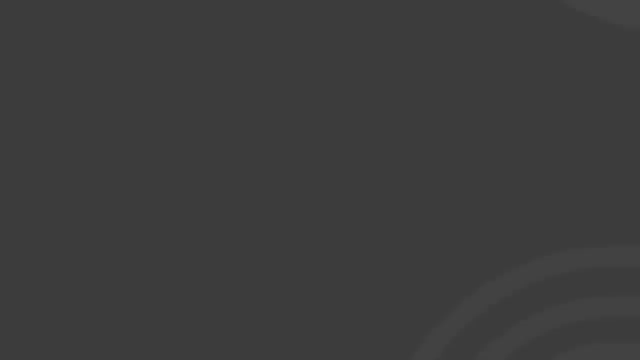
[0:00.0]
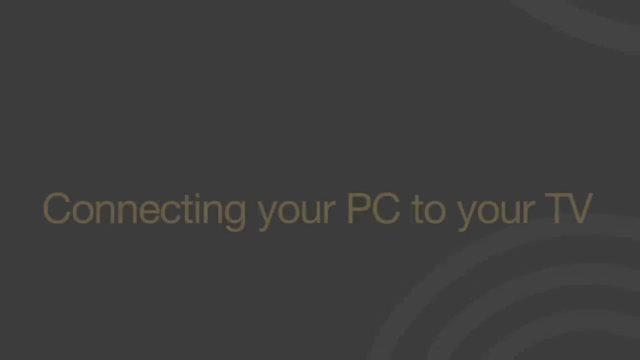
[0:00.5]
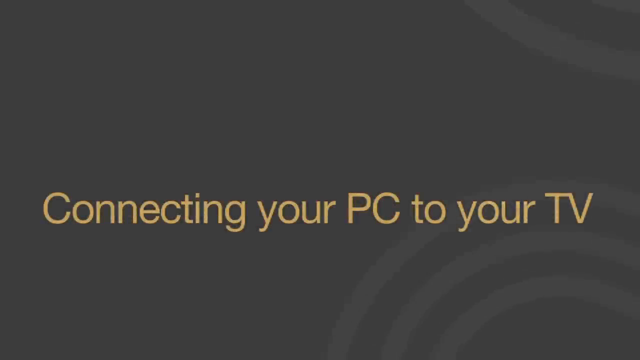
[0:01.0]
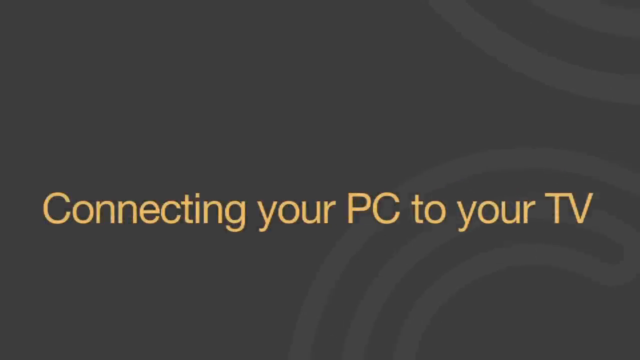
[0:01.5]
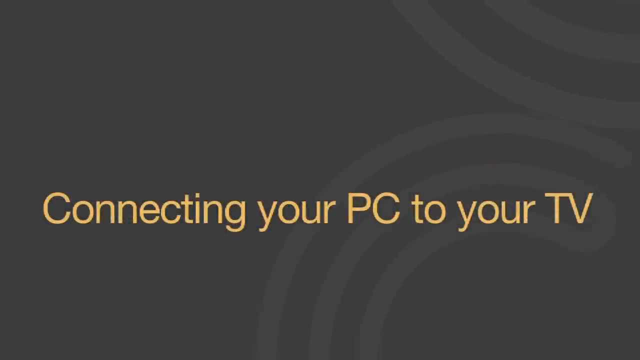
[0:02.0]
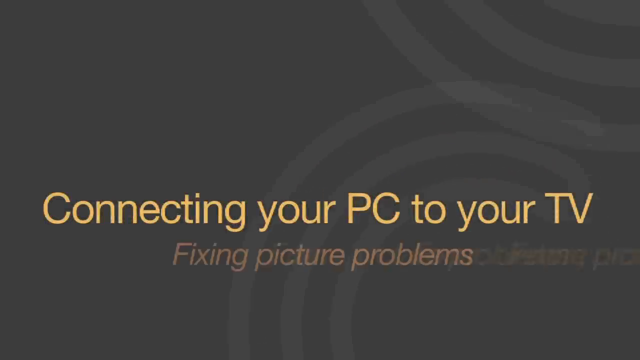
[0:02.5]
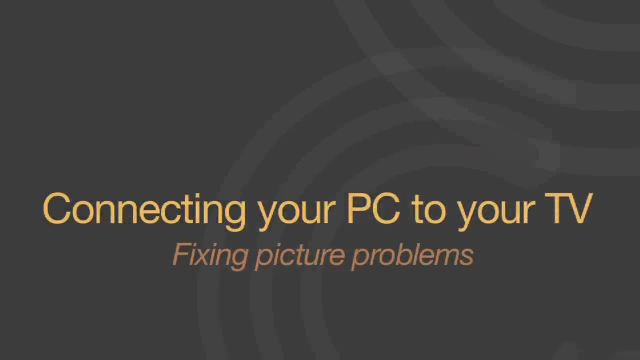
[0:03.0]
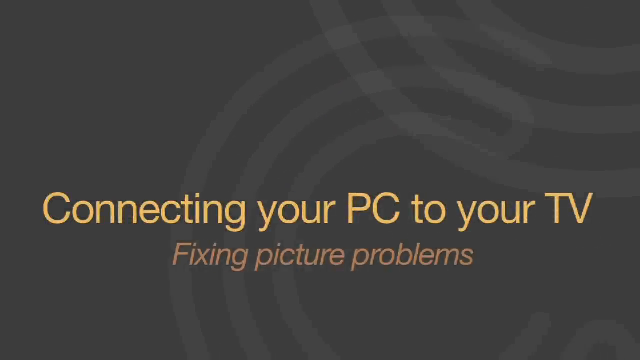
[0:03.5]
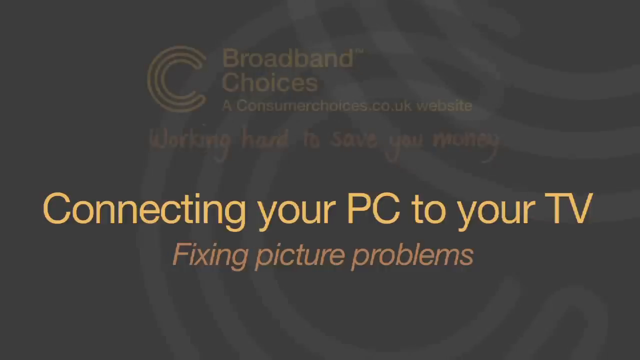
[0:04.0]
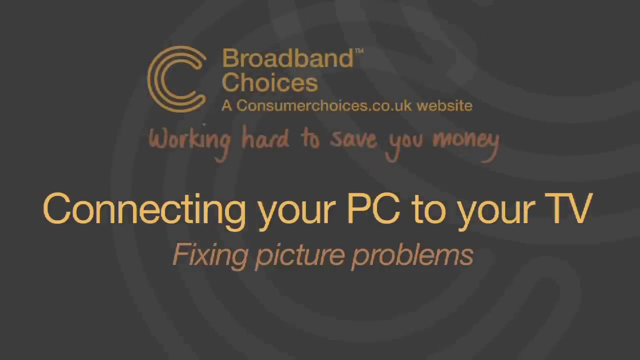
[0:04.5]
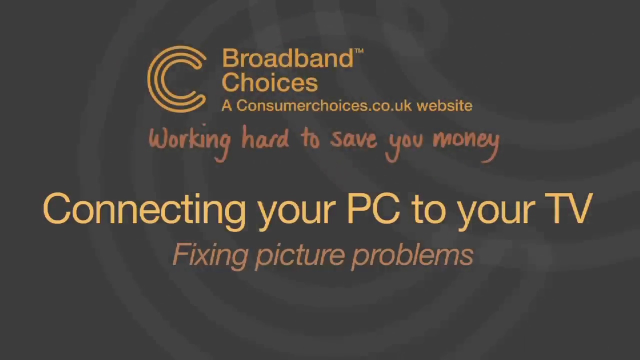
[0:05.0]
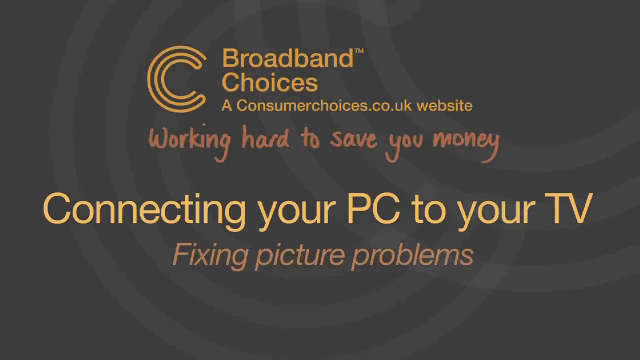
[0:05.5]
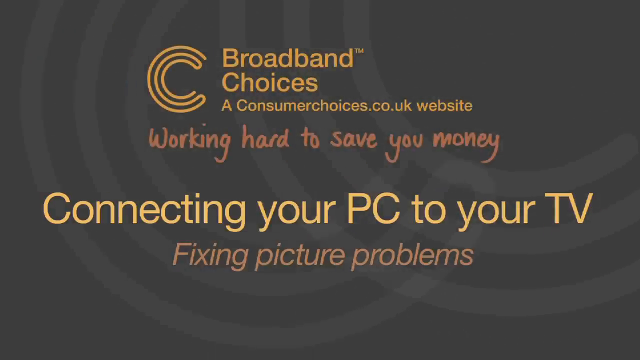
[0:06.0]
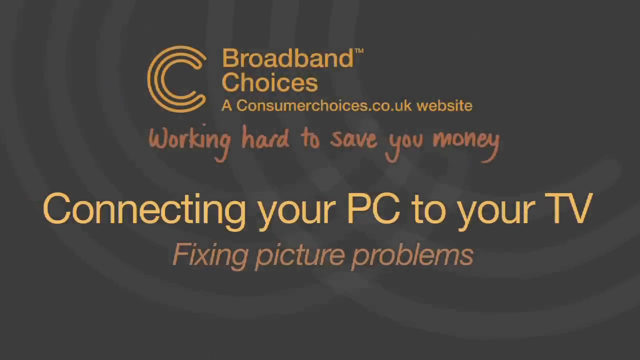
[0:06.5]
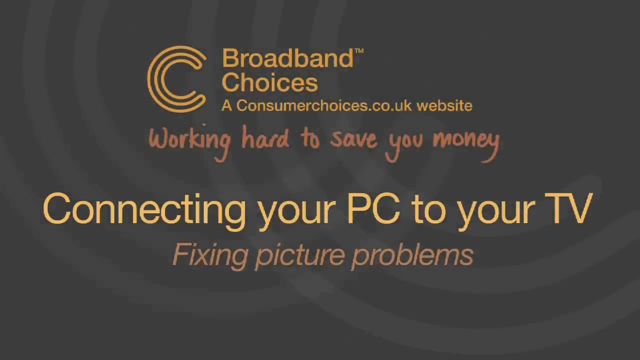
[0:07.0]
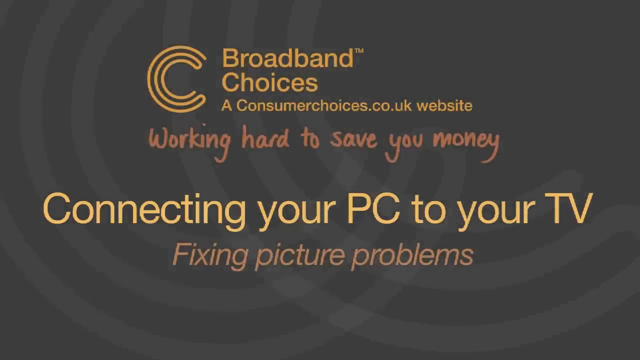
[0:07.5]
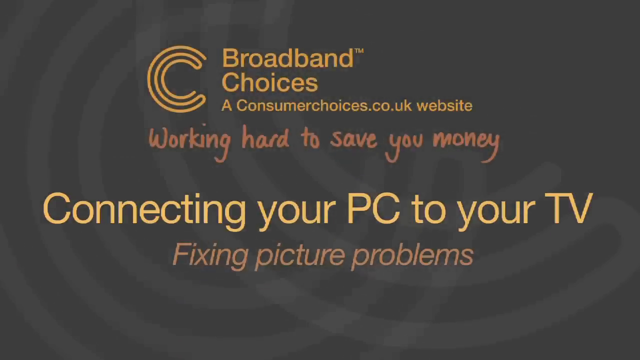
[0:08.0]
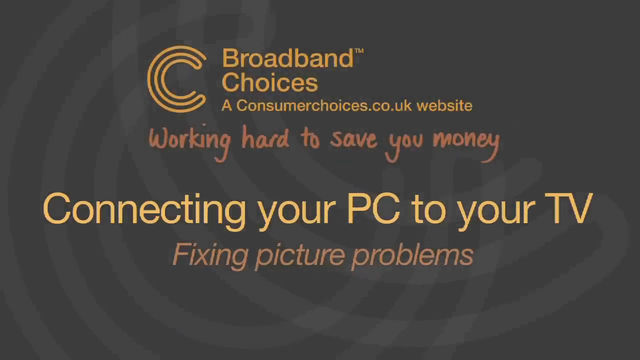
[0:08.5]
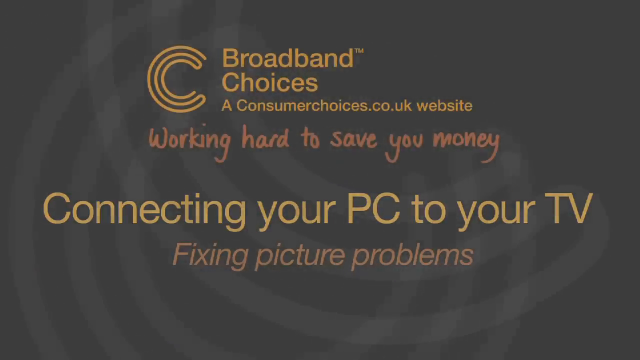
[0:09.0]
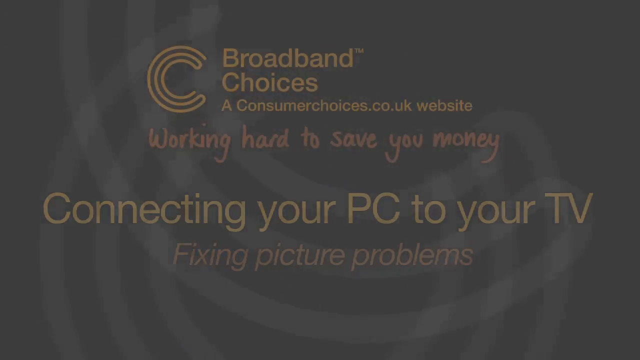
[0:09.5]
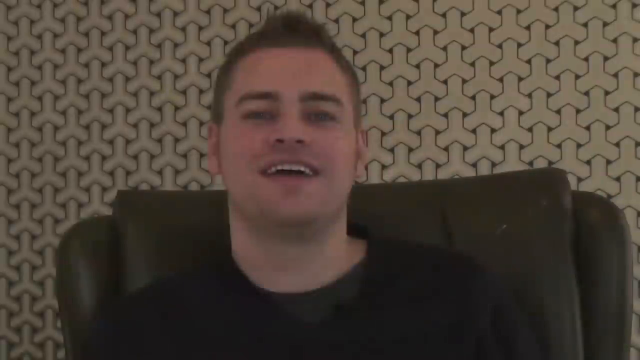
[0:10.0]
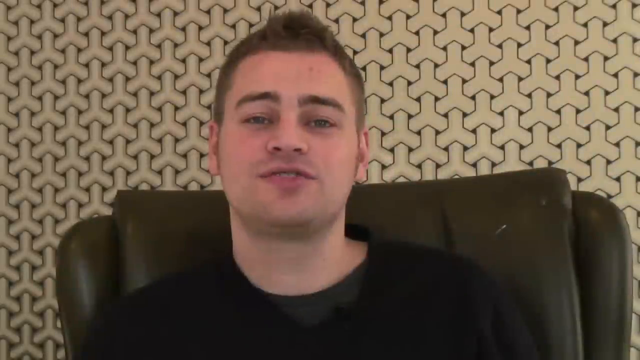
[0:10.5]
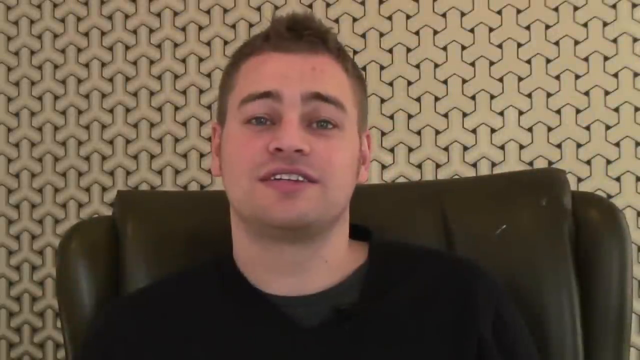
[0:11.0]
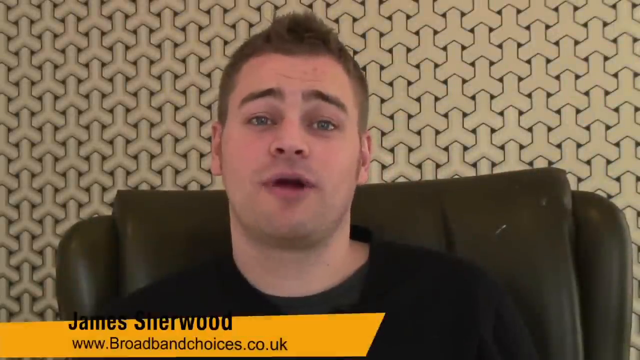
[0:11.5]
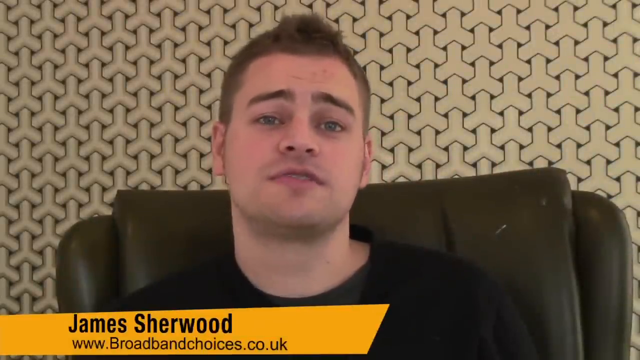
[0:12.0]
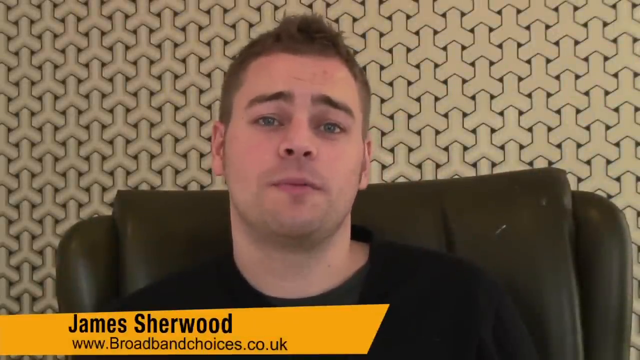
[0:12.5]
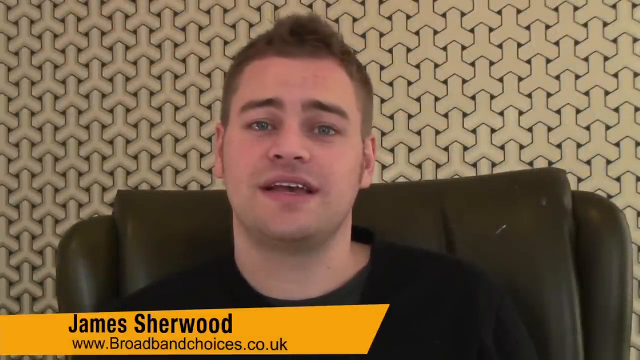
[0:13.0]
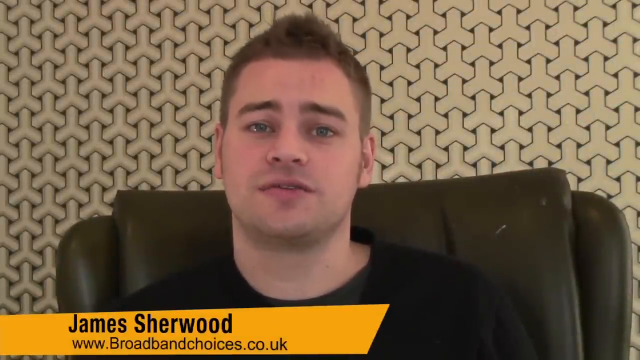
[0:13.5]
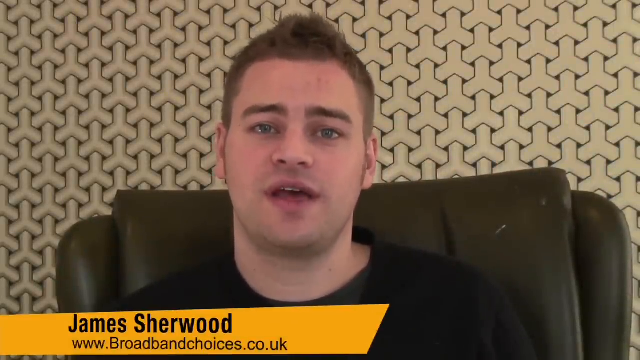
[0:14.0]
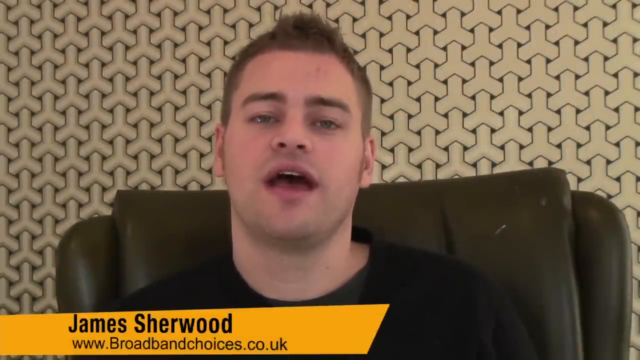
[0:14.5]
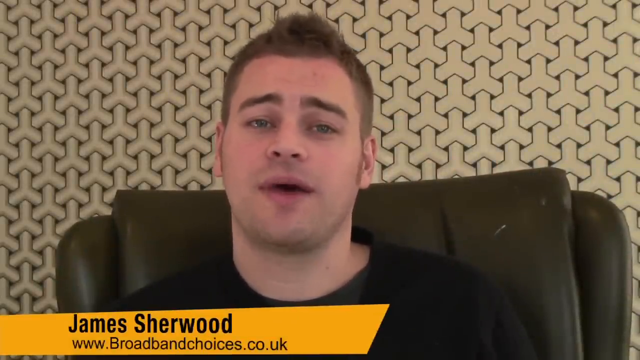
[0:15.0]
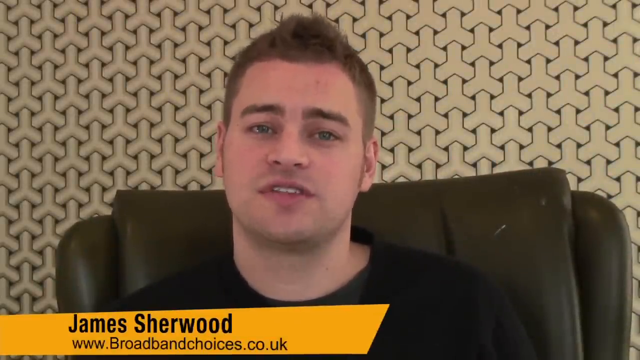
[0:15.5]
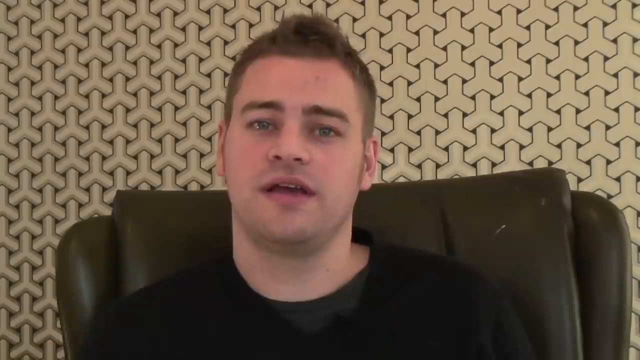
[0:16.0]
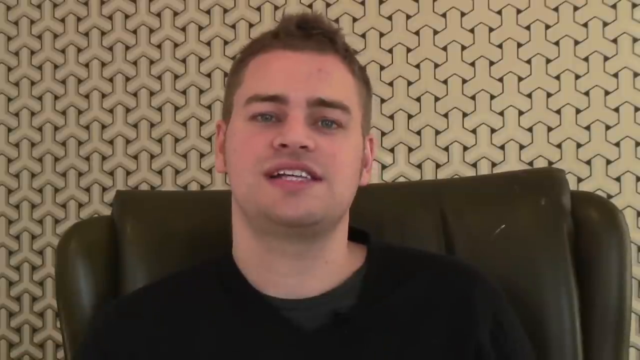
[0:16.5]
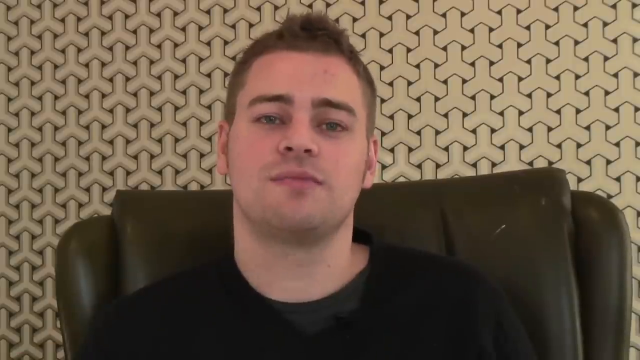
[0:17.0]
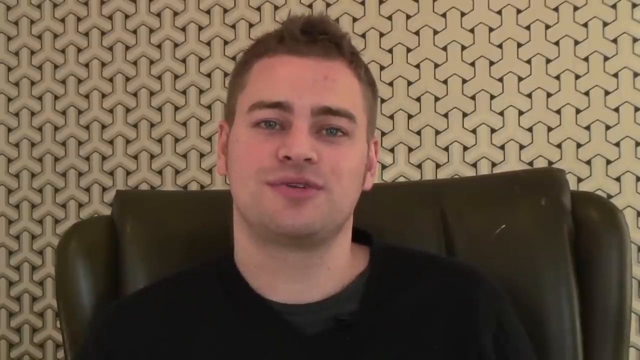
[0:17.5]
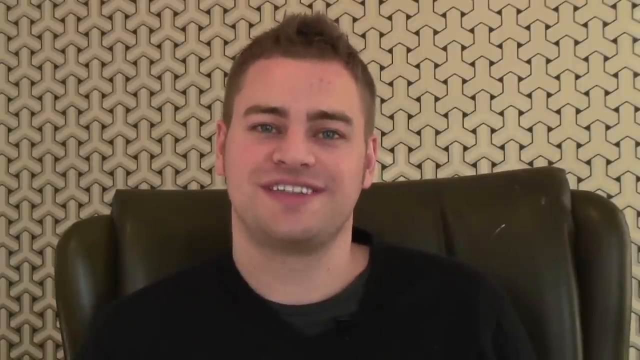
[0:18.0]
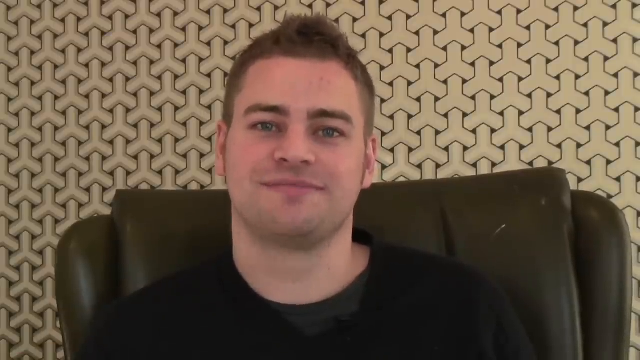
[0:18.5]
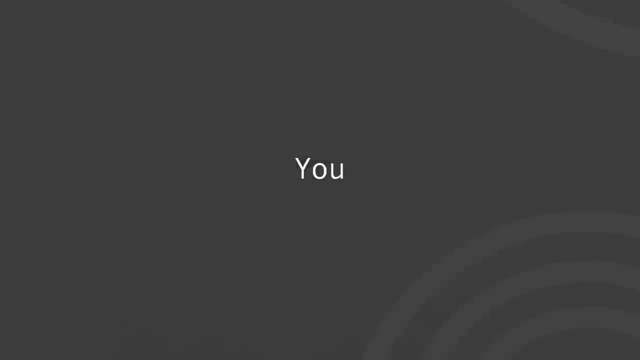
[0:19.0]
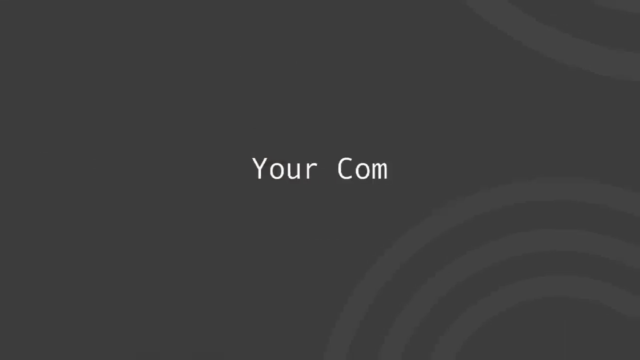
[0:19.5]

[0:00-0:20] A man called James Sherwood appears in the video, sitting in a black chair.